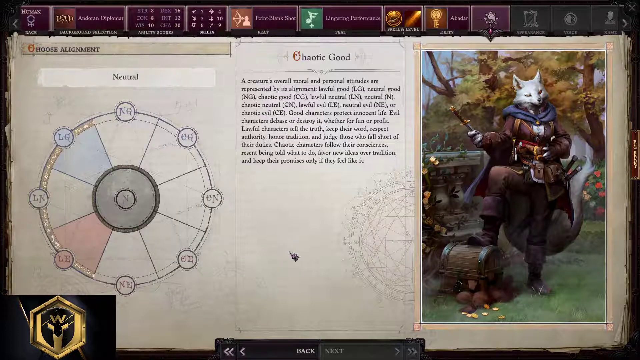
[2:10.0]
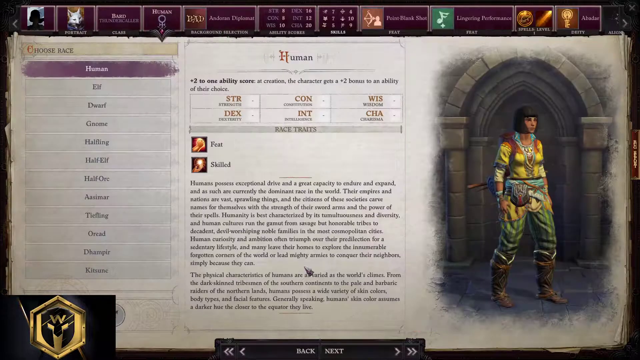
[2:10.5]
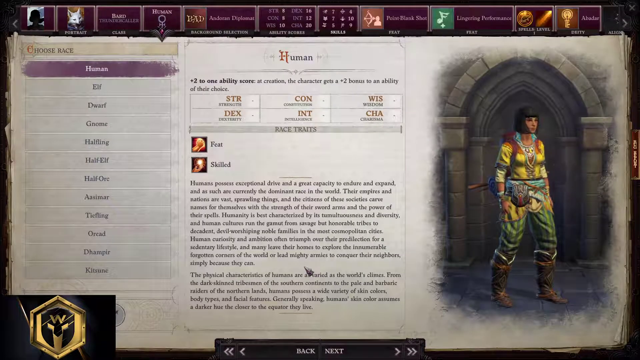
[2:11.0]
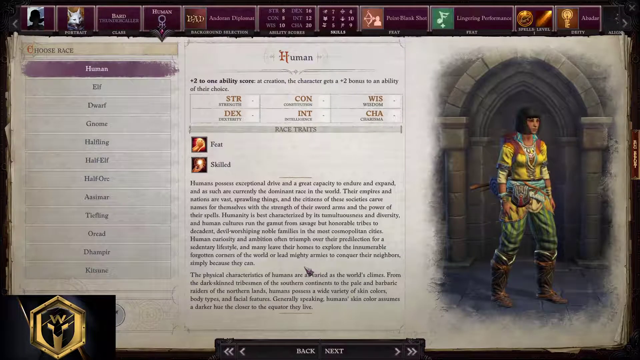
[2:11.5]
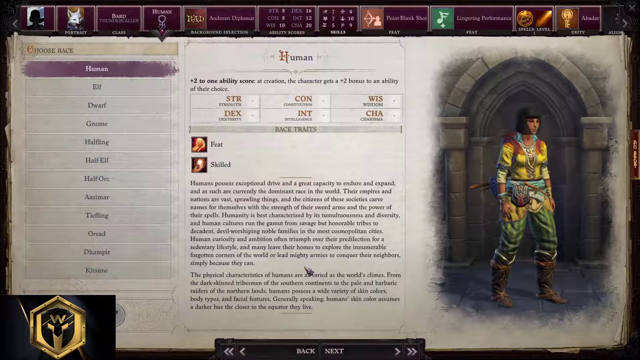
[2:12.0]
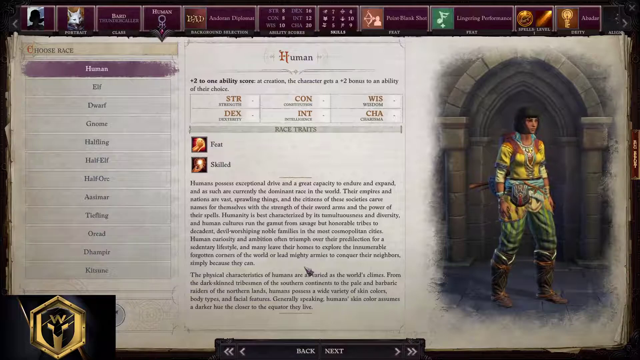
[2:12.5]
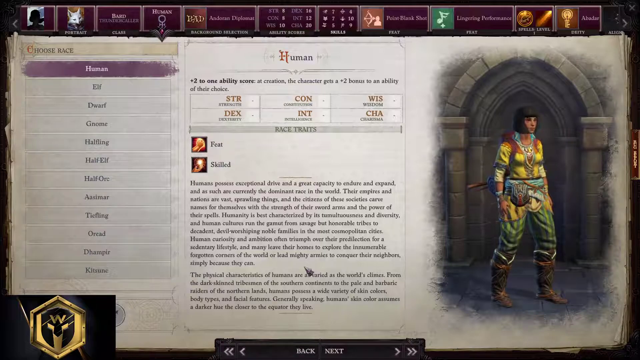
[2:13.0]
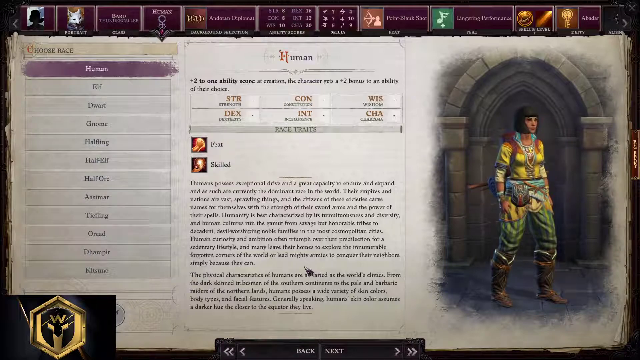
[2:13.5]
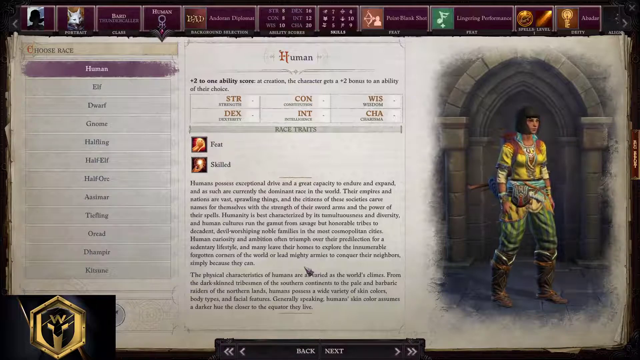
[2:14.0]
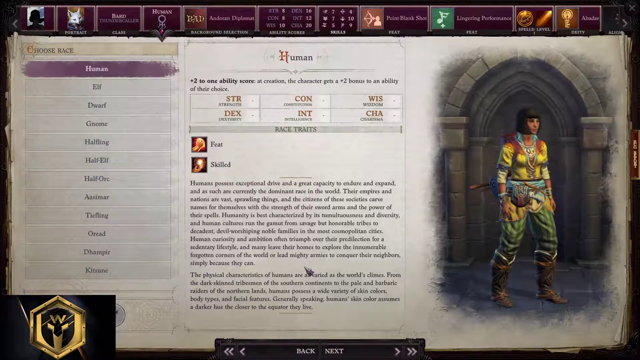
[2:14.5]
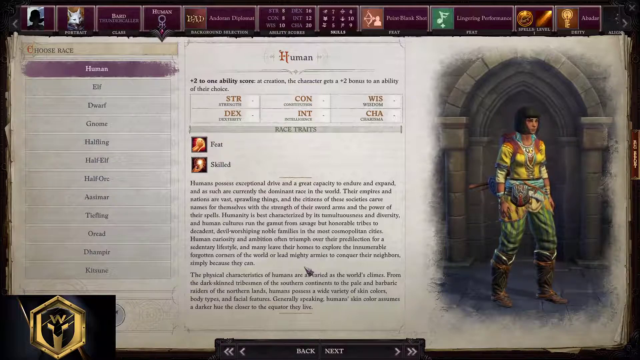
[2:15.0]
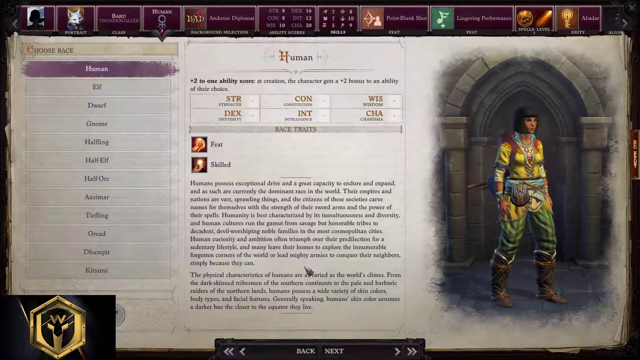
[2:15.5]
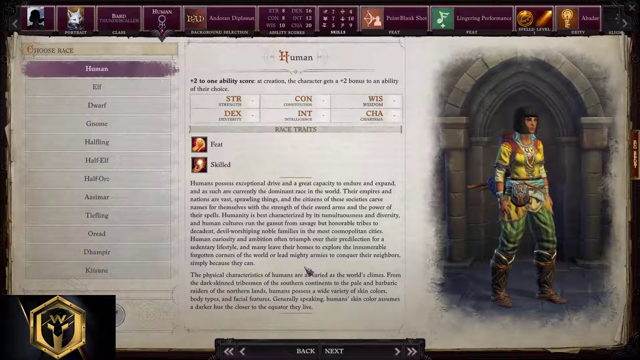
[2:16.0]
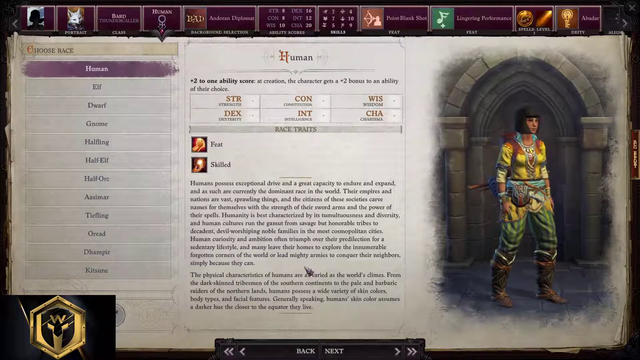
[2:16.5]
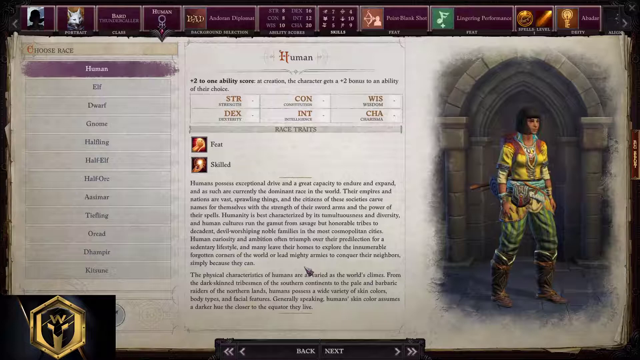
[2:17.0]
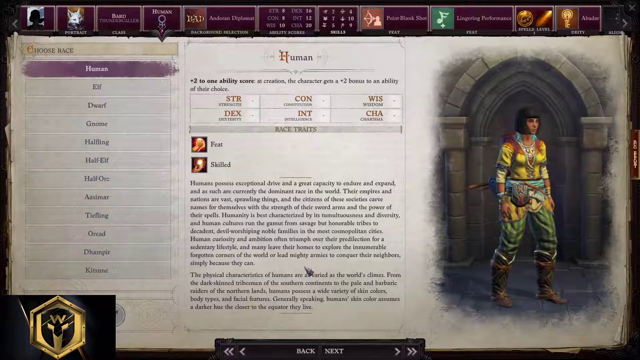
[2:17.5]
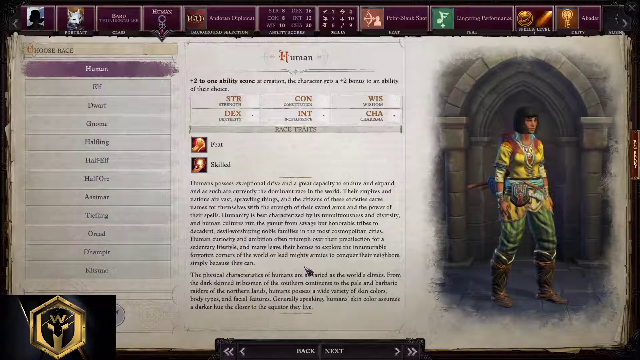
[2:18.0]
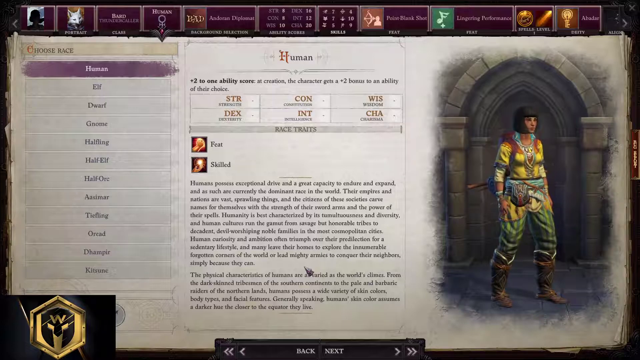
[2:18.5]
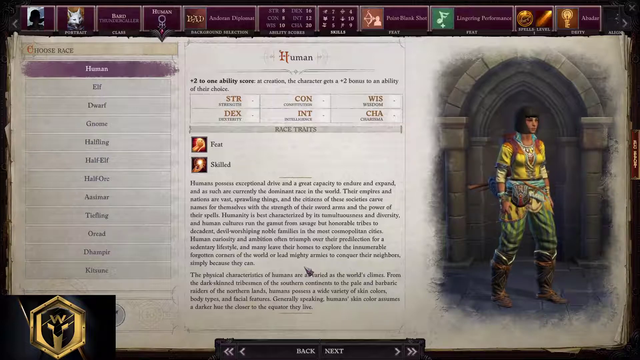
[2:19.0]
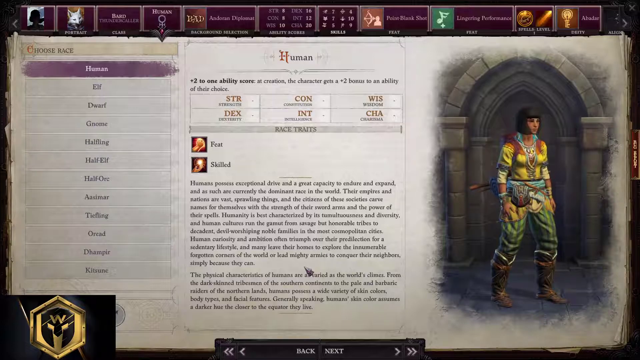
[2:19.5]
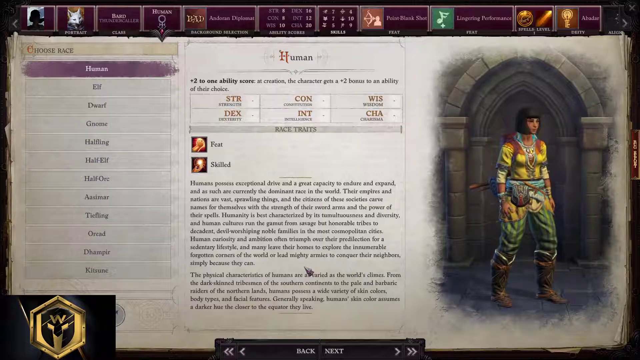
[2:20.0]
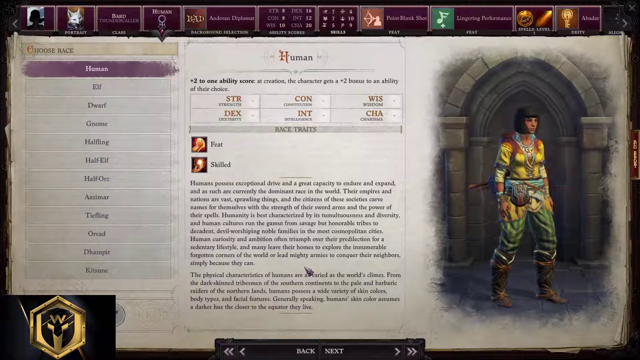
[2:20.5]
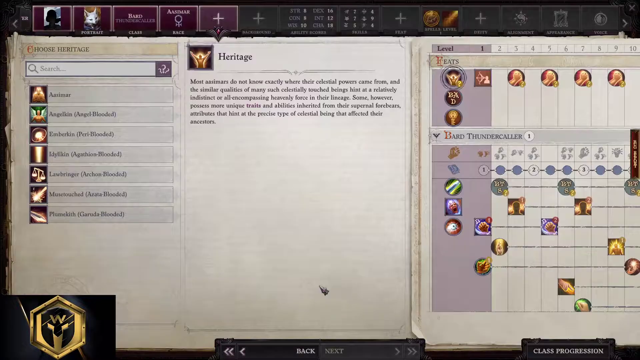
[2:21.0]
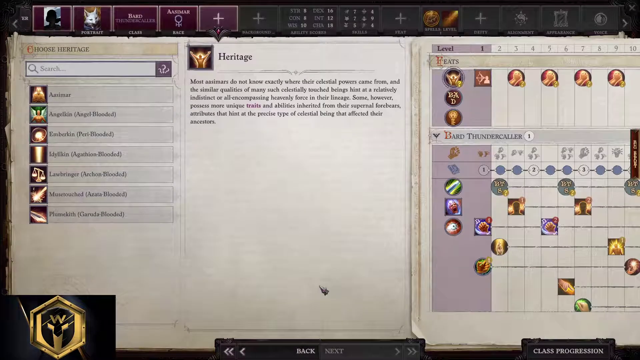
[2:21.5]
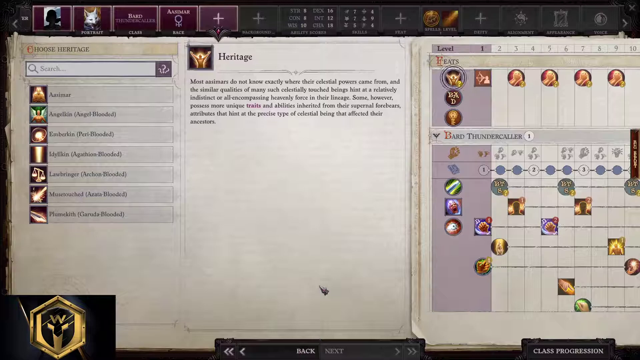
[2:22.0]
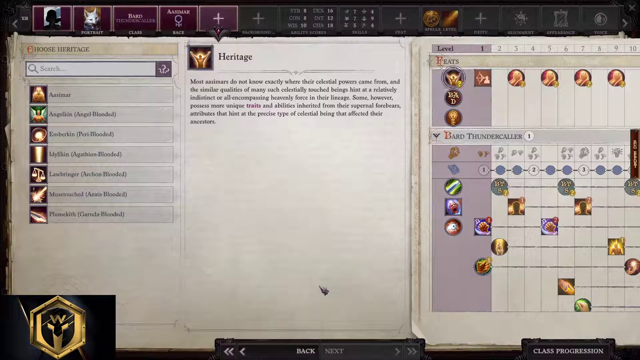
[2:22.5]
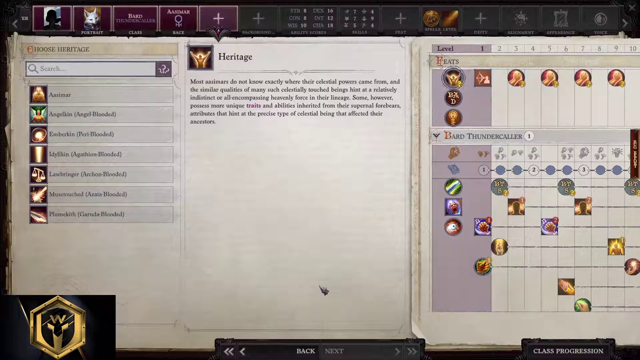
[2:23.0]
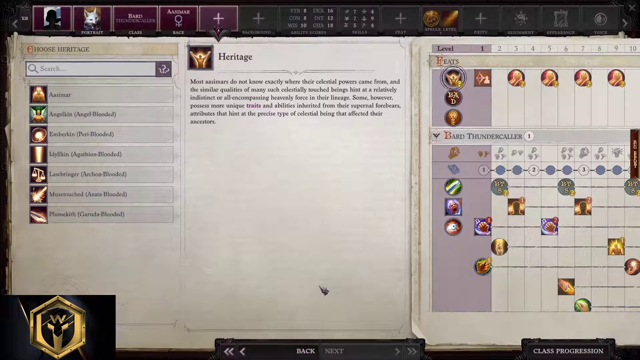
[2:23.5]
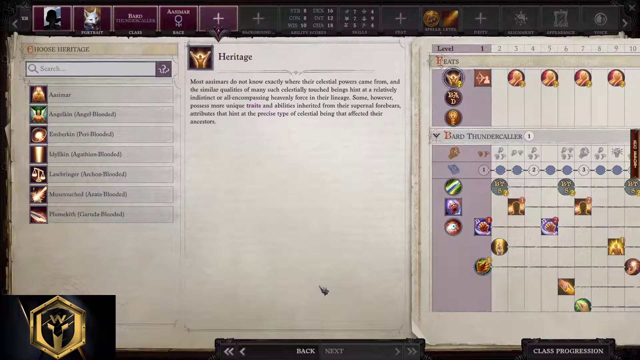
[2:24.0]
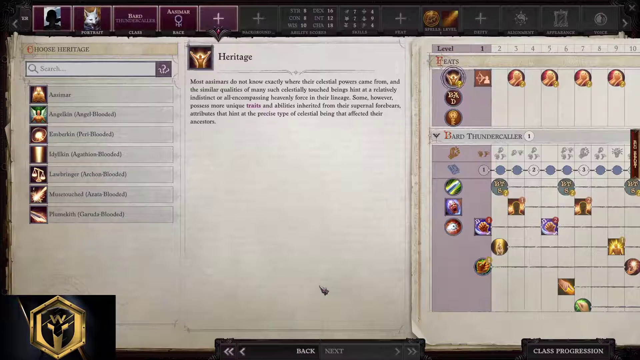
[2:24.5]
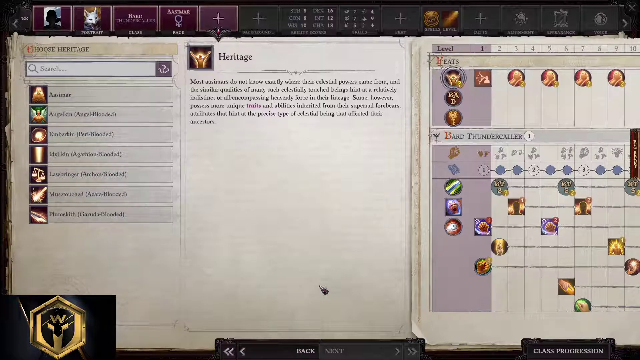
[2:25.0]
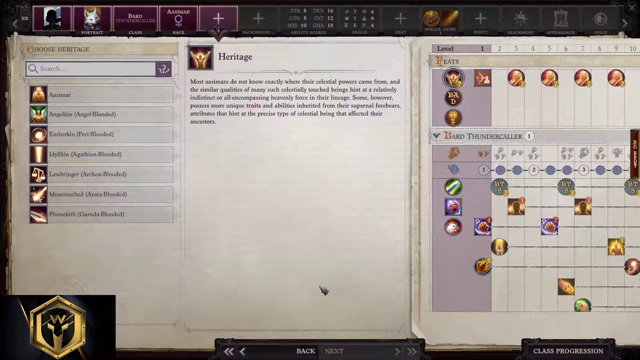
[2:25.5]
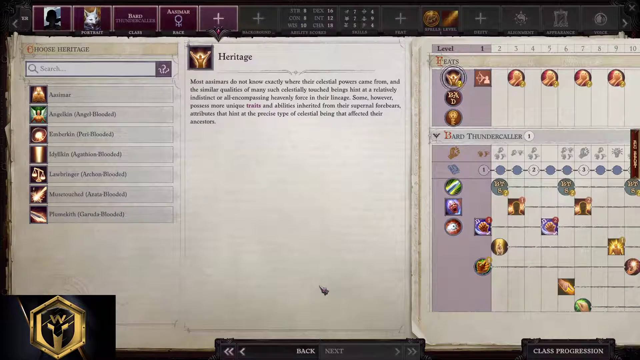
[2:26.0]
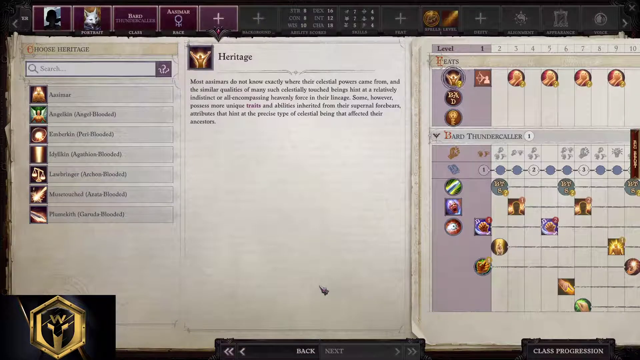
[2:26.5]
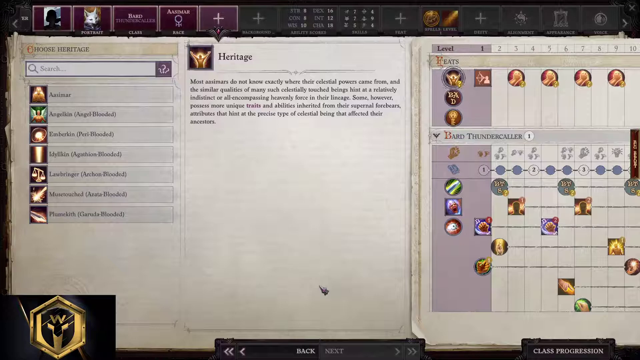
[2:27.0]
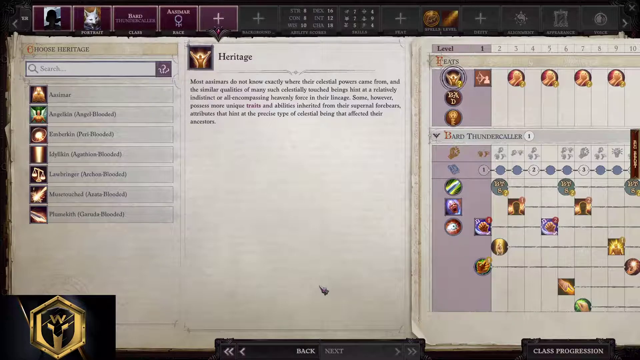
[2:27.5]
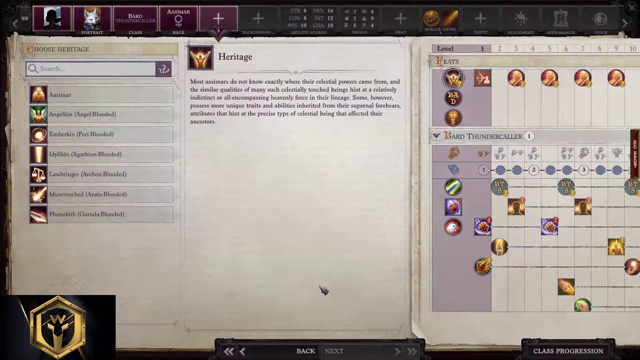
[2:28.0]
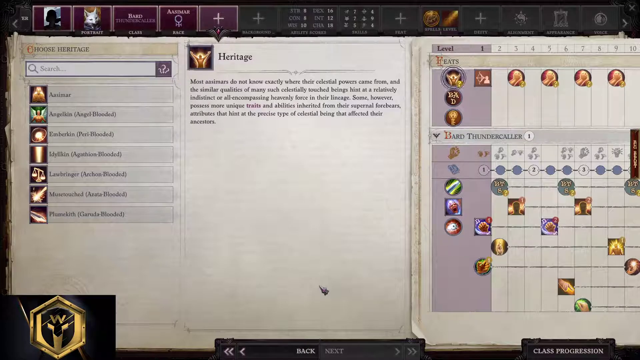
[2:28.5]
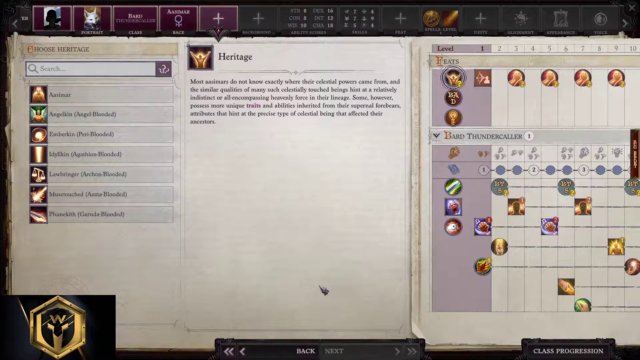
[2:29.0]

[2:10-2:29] On the right side of the game screen is an avatar wearing boots and green striped pants in two different shades of green, with some type of pouch around the waist; it appears to be a female character with black hair. The screen says "choose race" with human chosen, and reads "+2 to one ability score. At creation the character gets a +2 bonus to an ability of their choice." It then shows the abilities strength, constitution, wisdom, dexterity, intelligence and charisma, followed by race traits, feat and skilled. The explanation reads "Humans possess exceptional drive and a great capacity to endure and expand and as such are currently the dominant race in the world. Their empires and nations are vast sprawling things and the citizens of these societies carve names for themselves with the strength of their sword arms and the power of their spells. Humanity is best characterized by its tumultuousness and diversity. And human cultures run the gamut from savage but honorable tribes to decadent devil worshiping noble families in the most cosmopolitan cities. Human curiosity and ambition often triumph over their predilection for a sedentary lifestyle and many leave their homes to explore the innumerable forgotten corners of the world or lead mighty armies to conquer their neighbors simply because they can."